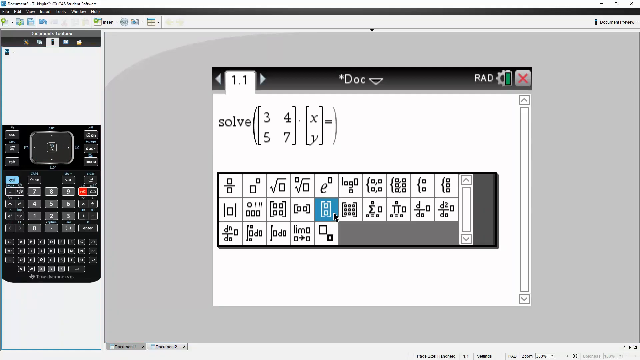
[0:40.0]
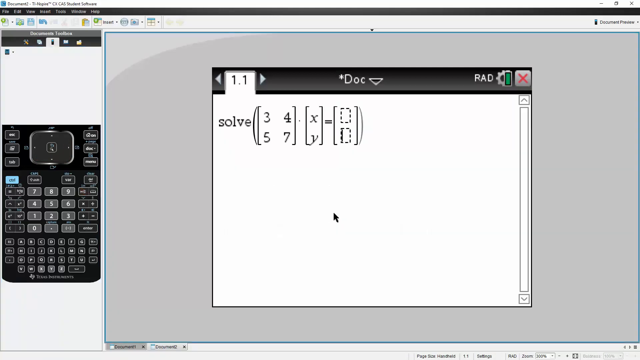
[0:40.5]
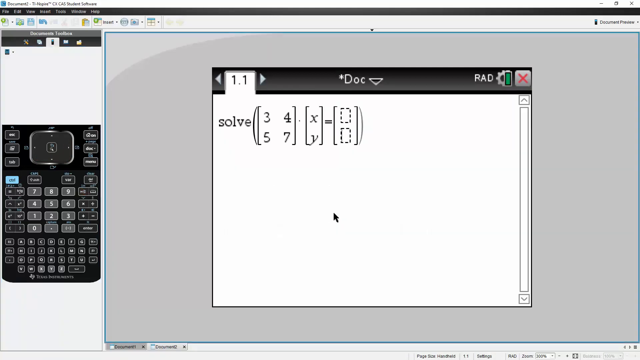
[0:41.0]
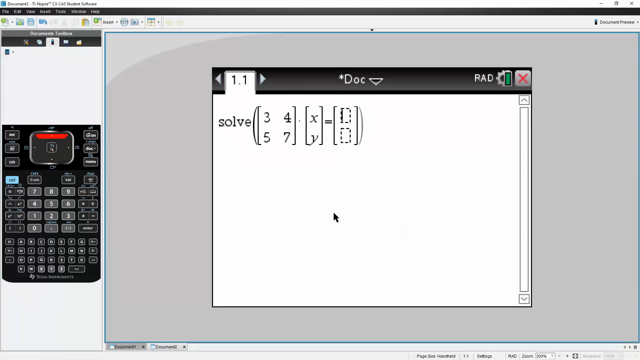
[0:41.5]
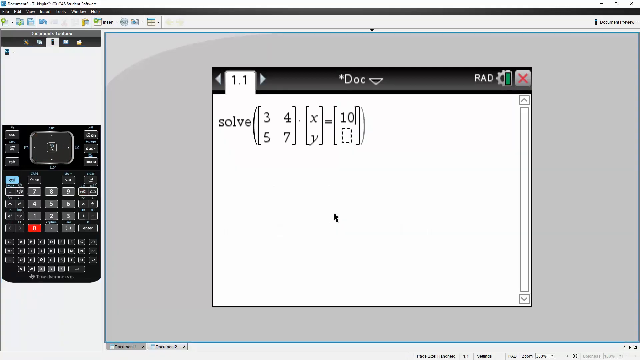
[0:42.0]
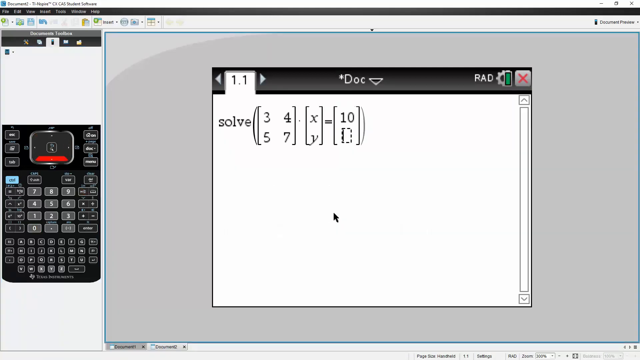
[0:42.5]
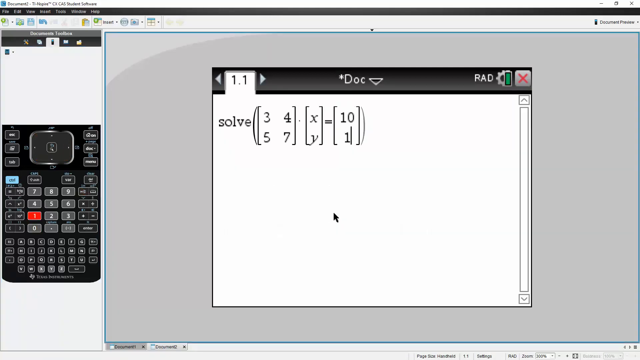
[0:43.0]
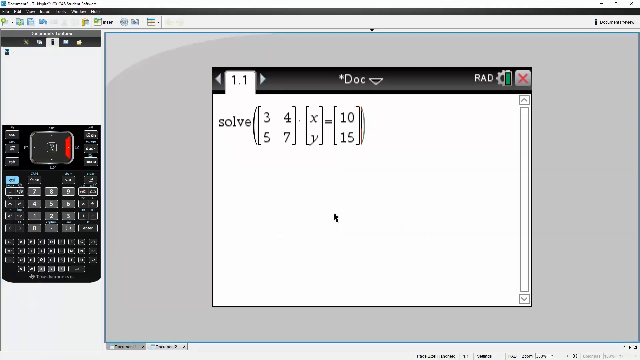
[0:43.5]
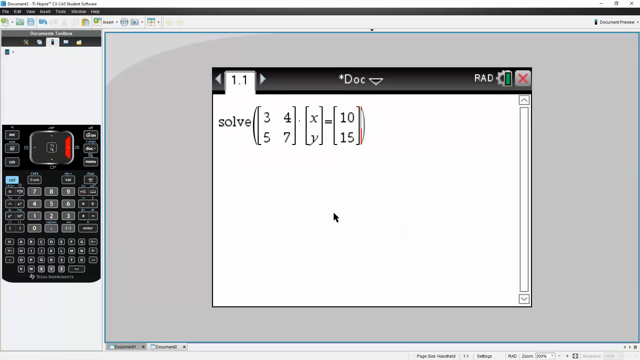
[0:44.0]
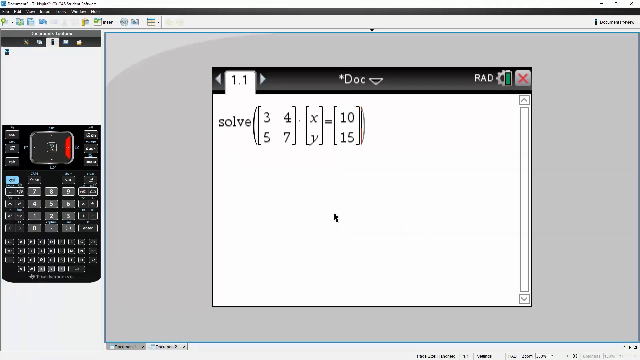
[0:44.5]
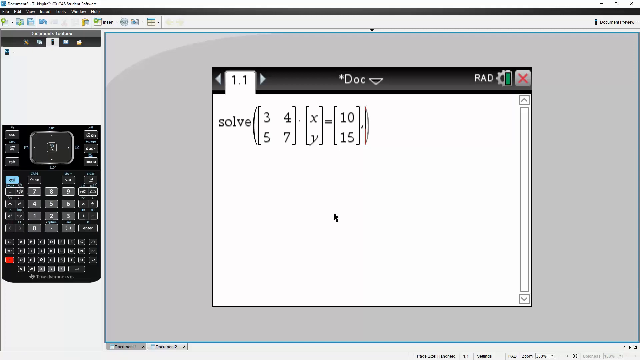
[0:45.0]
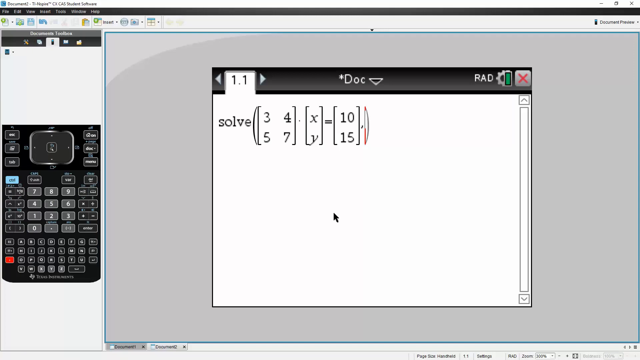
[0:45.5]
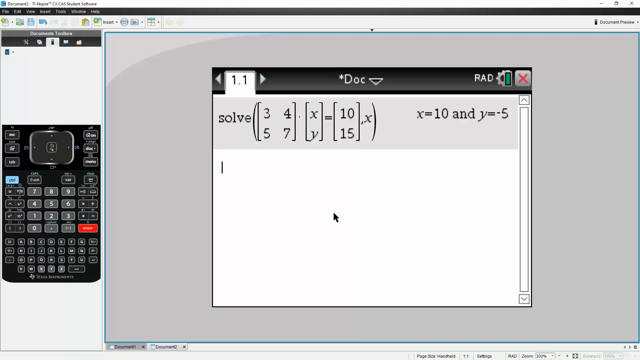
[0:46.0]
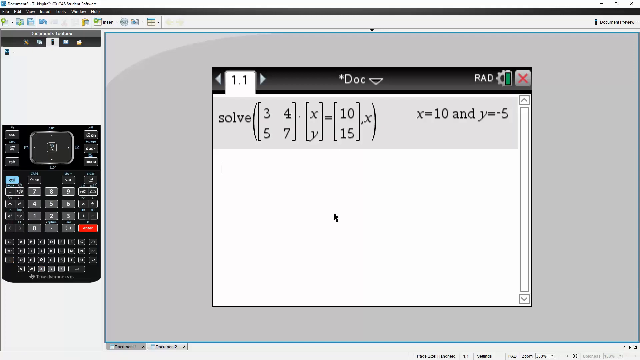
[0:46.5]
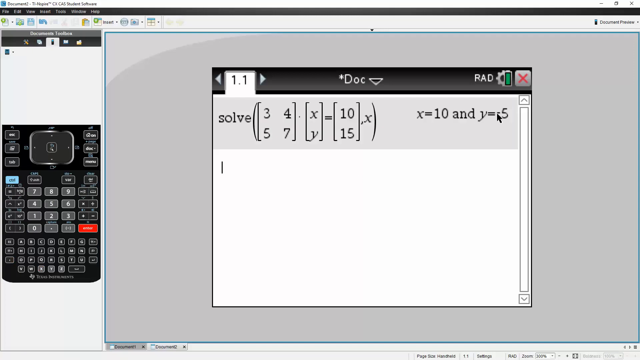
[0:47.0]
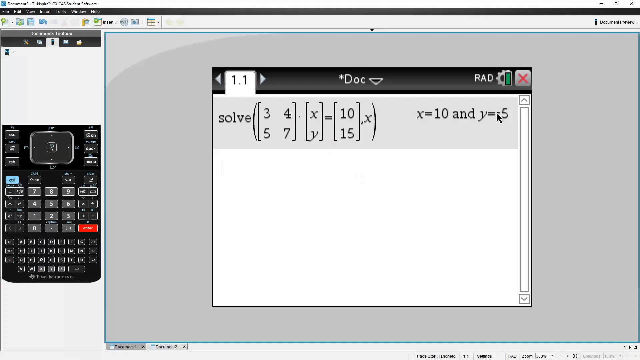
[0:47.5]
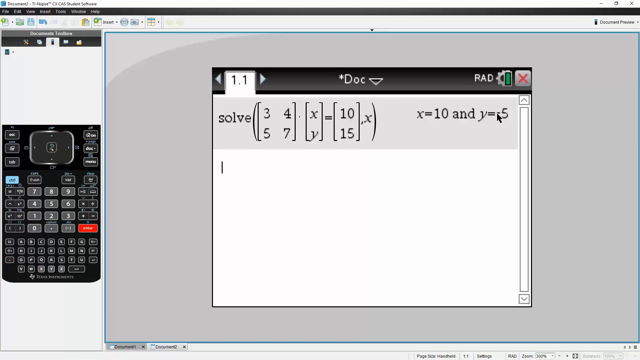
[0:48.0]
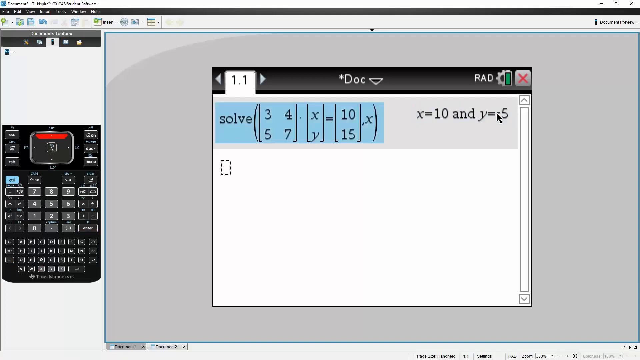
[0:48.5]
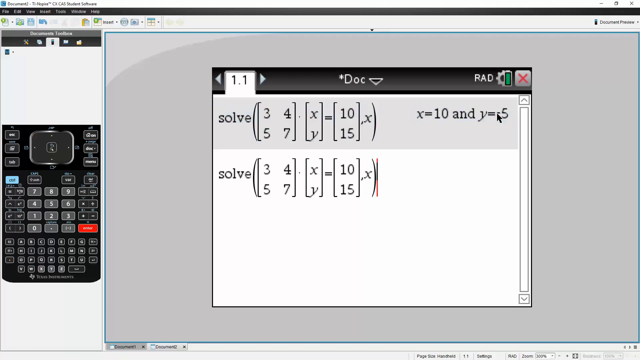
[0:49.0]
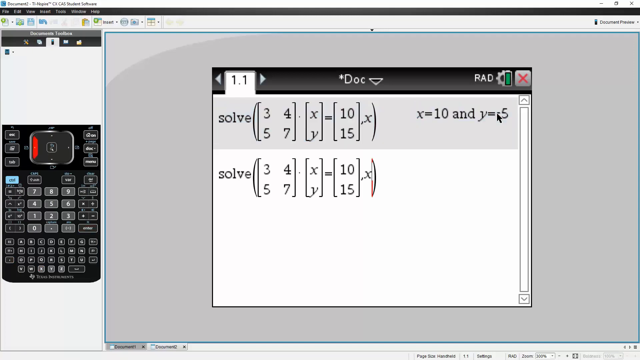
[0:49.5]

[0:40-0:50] The matrix sum is shown on the large central screen against a larger gray background, with a scientific calculator at the left-hand side. The entry reads solve, then the matrix, equals 10, 15, comma, x, and the result gives x as 10 and y as -5, the solution to the matrix problem. The cursor moves to where it says y equals minus 5, and the original question is highlighted in blue. The whole original is highlighted in blue, and the question is then duplicated and printed out again underneath the original.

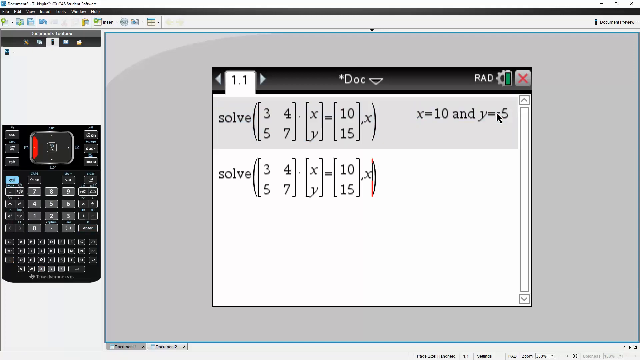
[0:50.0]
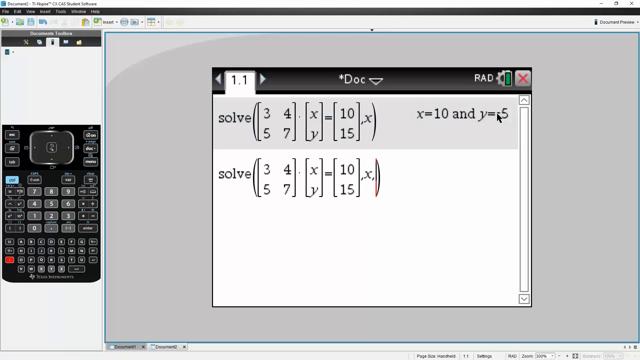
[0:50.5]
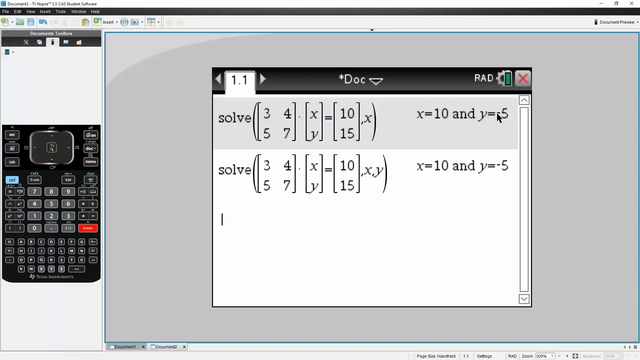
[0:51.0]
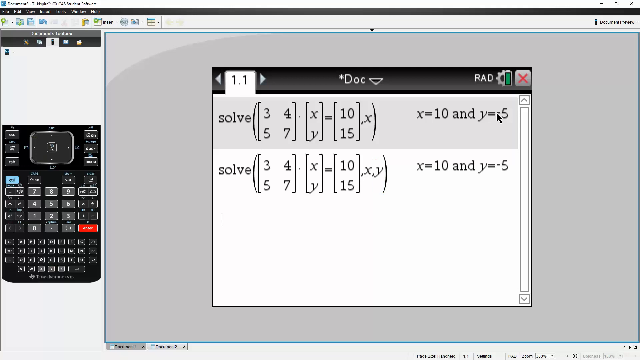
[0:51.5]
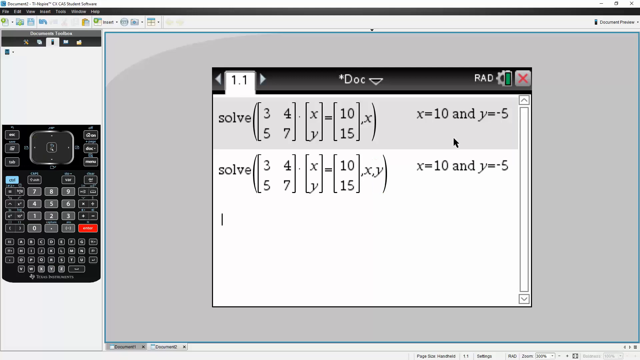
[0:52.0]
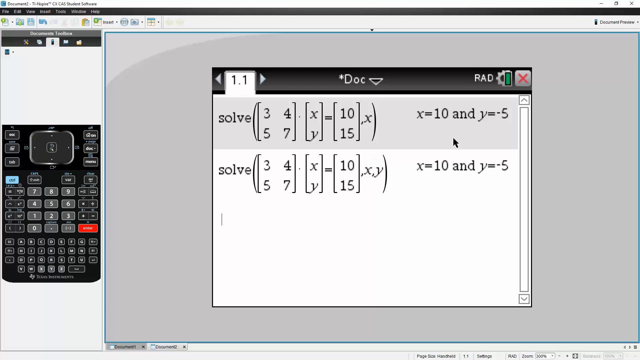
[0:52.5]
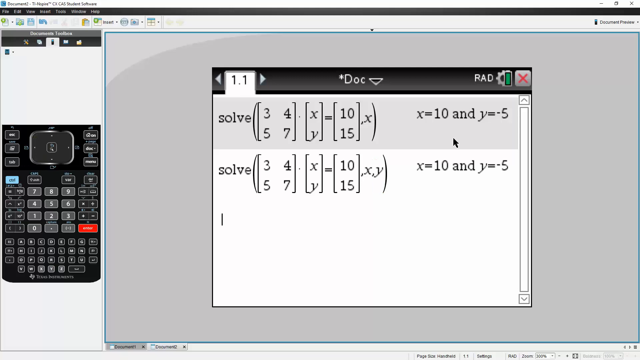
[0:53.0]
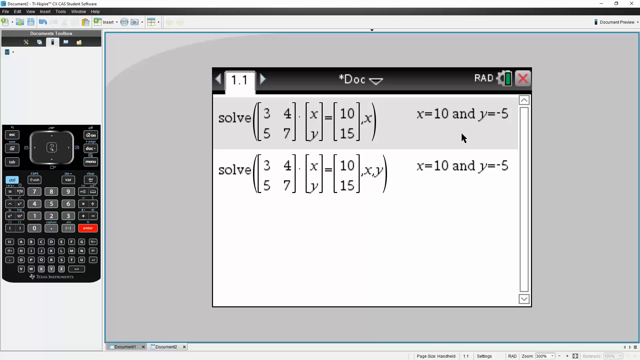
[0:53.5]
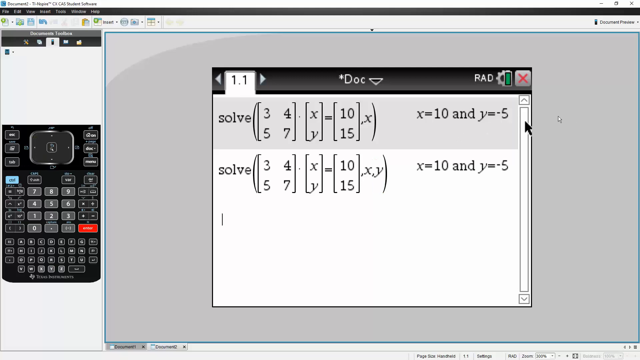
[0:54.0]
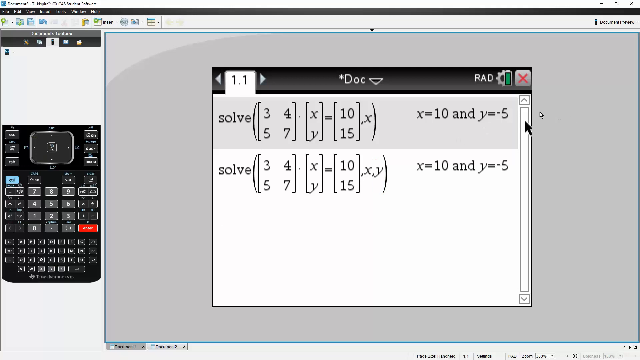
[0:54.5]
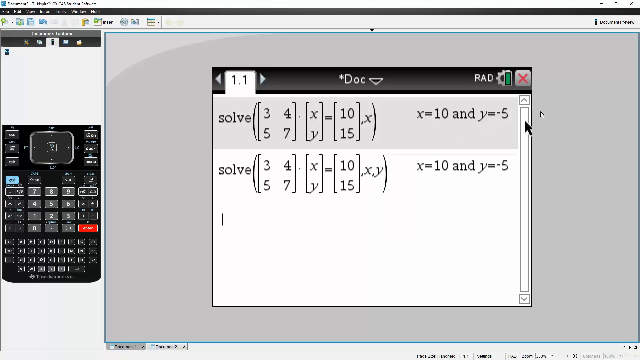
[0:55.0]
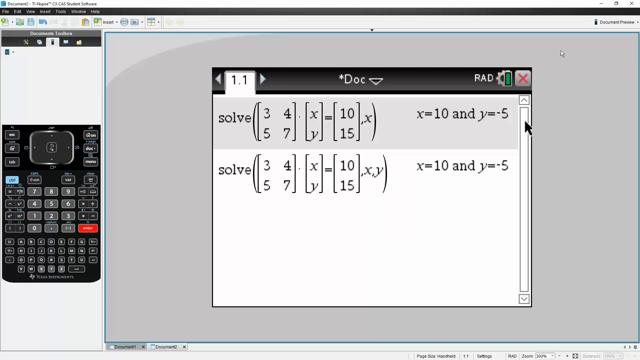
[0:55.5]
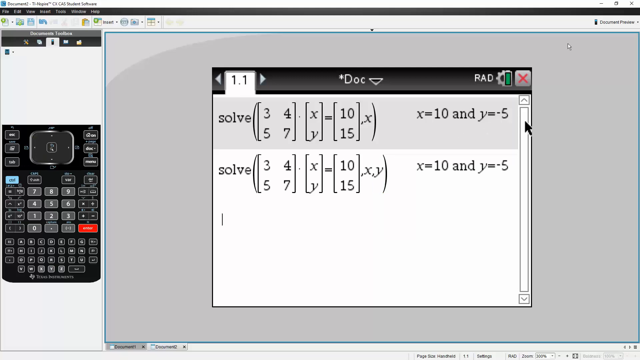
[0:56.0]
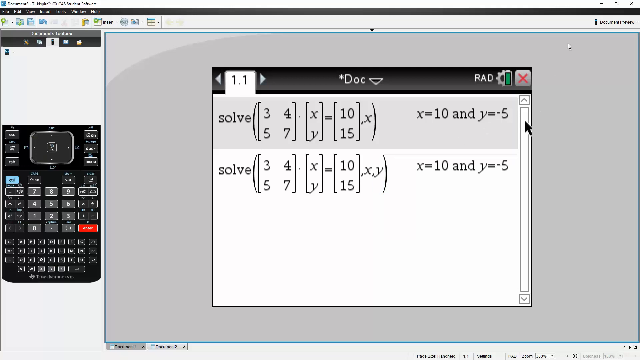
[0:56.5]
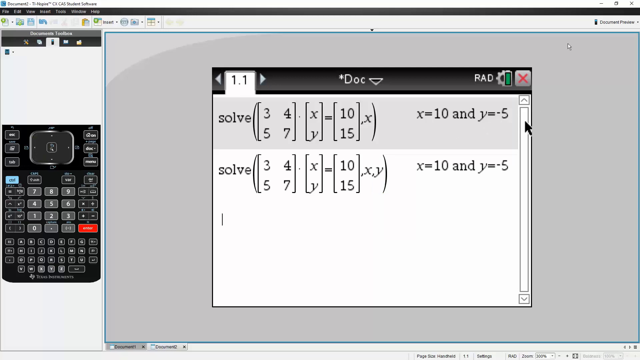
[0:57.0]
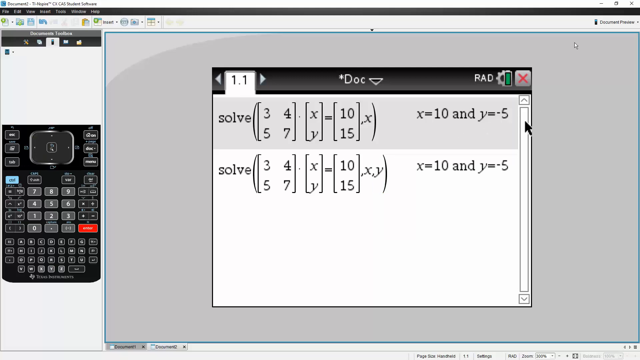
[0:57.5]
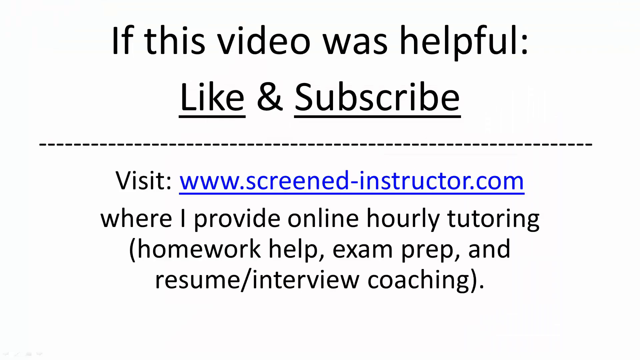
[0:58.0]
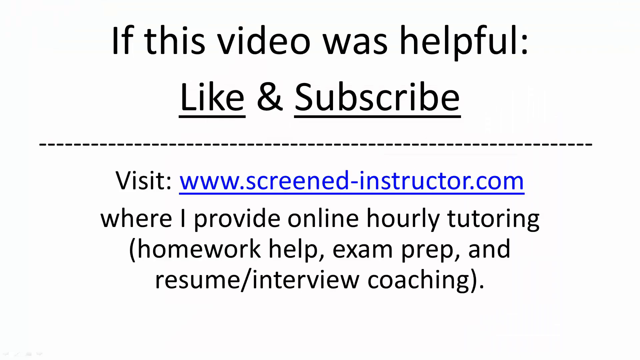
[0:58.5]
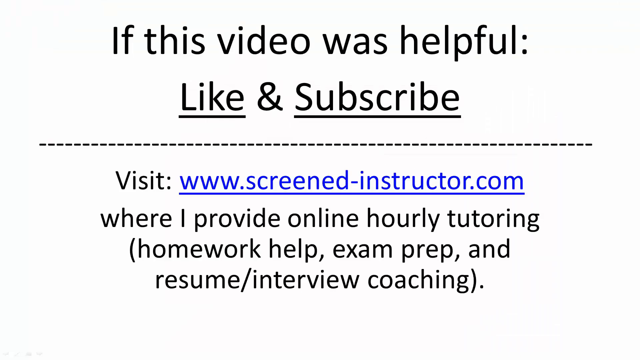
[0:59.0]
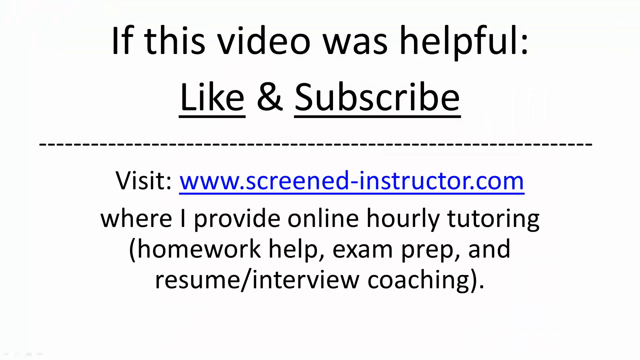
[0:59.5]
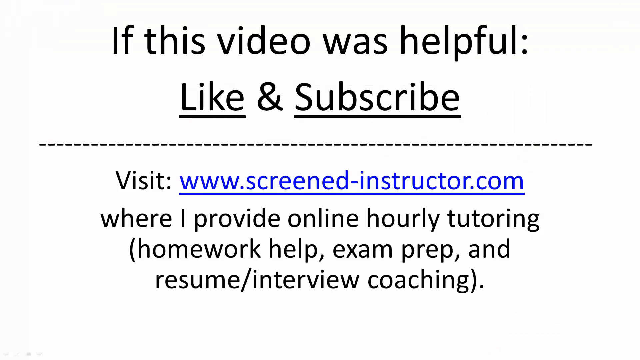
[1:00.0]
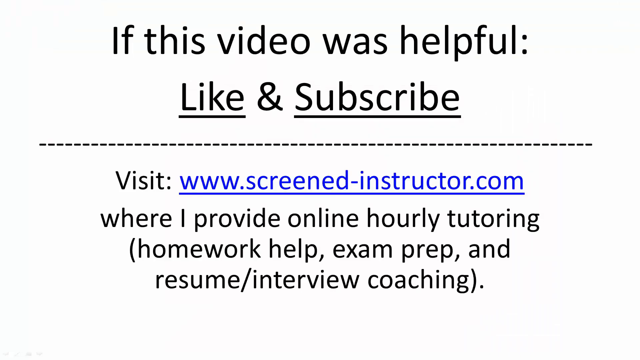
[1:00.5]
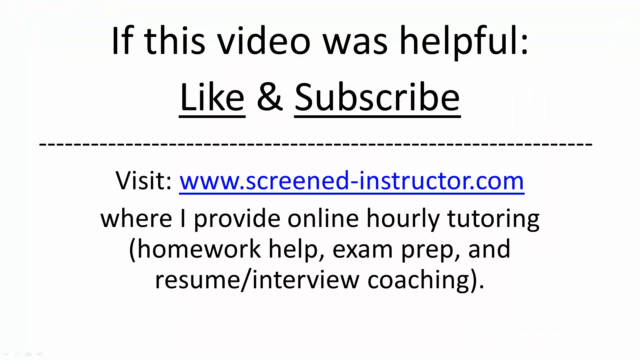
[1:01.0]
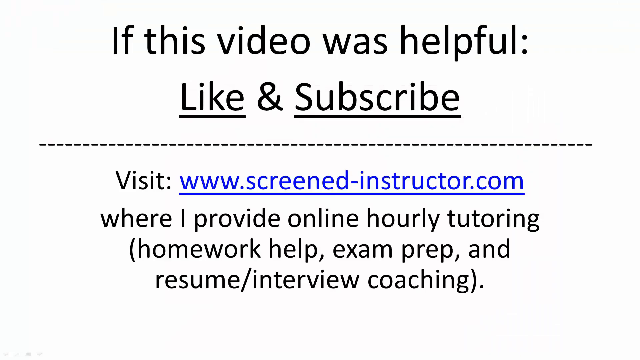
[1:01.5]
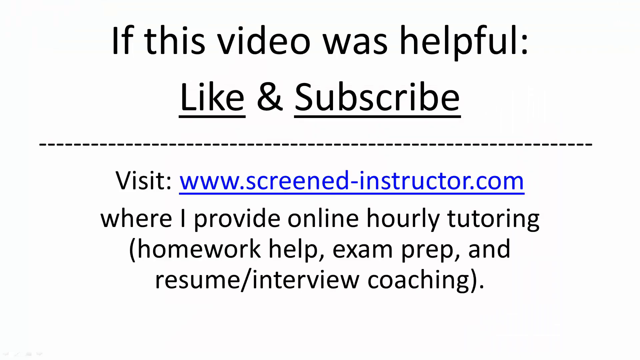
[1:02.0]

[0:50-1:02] The question has been copied, so the top line shows the question and the second line shows an exact copy, which repeats the answer x equals 10 and y equals minus 5; two identical lines show the problem and solution. The mouse moves to the scroll bar on the right-hand side of the answer window, and the problem is complete. Text then says "if this video was helpful, like and subscribe", credits ScreenedInstructor.com, and lists hourly tutoring, homework help, exam preparation and interview coaching.